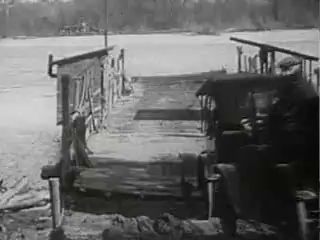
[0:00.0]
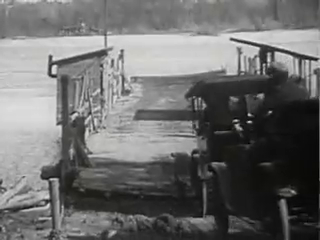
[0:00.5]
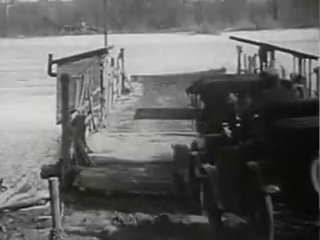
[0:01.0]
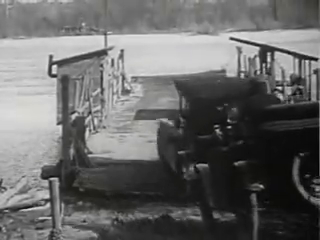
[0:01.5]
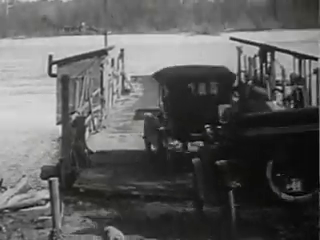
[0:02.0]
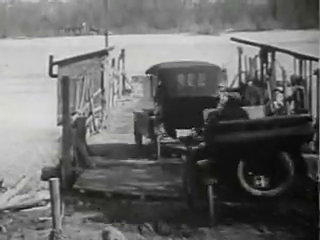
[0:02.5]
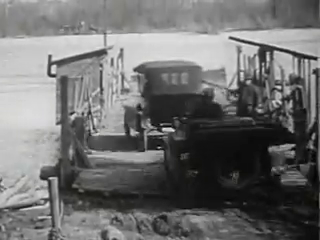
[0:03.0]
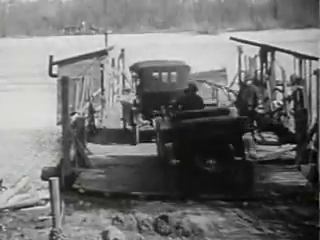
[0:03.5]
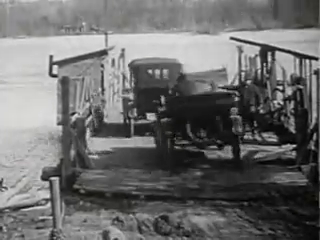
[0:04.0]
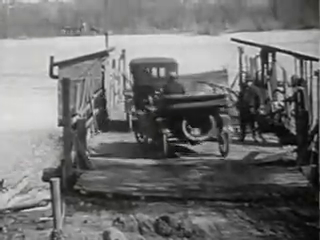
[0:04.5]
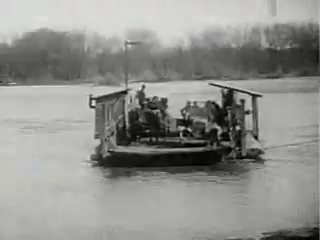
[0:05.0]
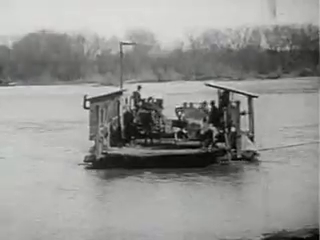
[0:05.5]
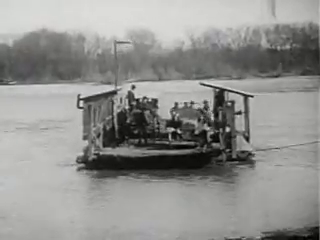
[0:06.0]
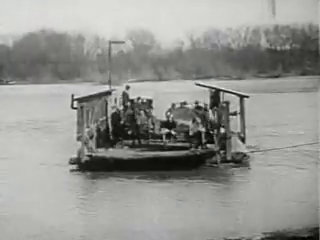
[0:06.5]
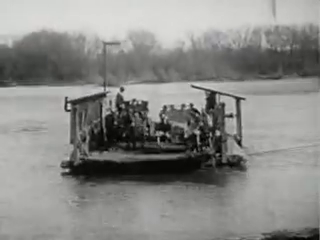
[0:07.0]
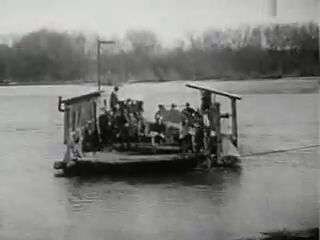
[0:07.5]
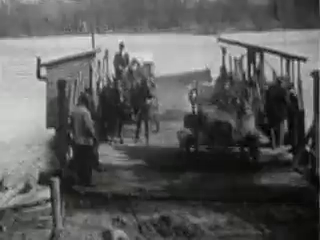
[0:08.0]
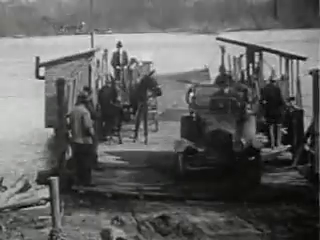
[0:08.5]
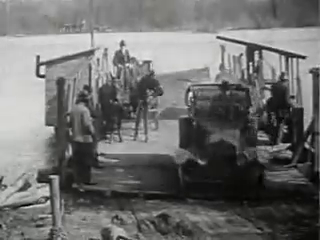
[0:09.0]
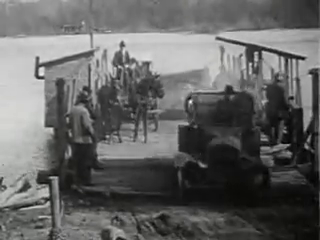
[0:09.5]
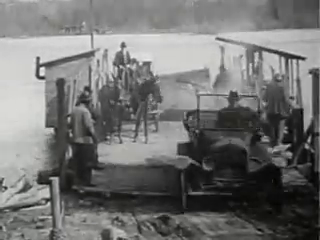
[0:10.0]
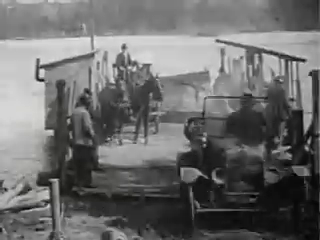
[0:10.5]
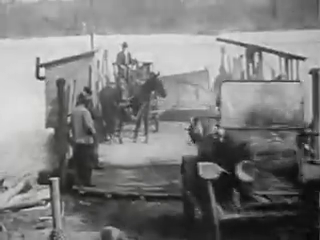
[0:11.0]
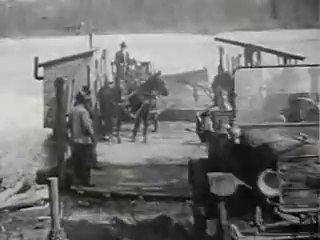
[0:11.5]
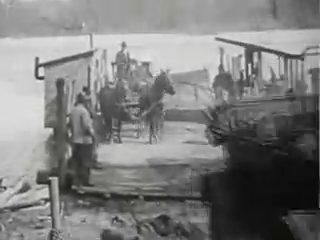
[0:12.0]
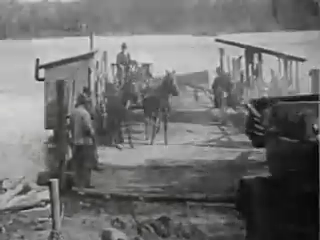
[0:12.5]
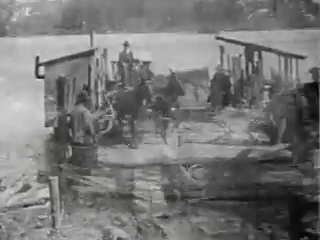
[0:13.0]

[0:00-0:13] A black and white video clip appears to be from the early 20th century or late 19th century. A short dock extends onto a body of water. A car drives onto what looks like a mobile dock, followed by another car or trailer. The video then cuts to another shot of the same dock, where the car is driving off the dock and back onto land while some horses and people on the dock remain. The footage is rather blurry and slightly out of focus, as it is old. In the background there appears to be some type of structure, and other land is across the body of water.